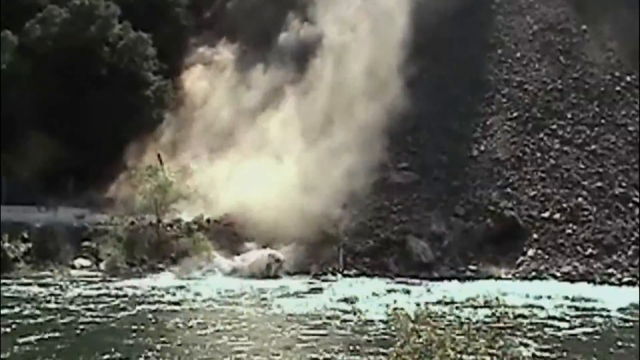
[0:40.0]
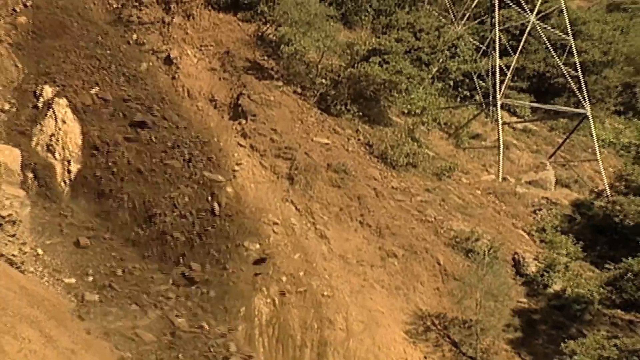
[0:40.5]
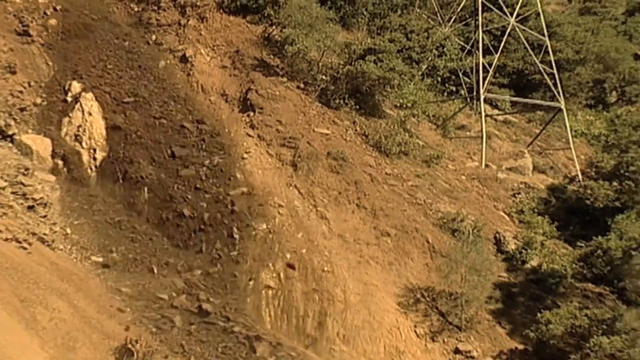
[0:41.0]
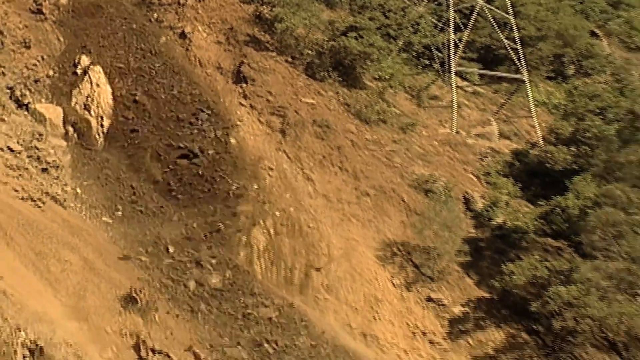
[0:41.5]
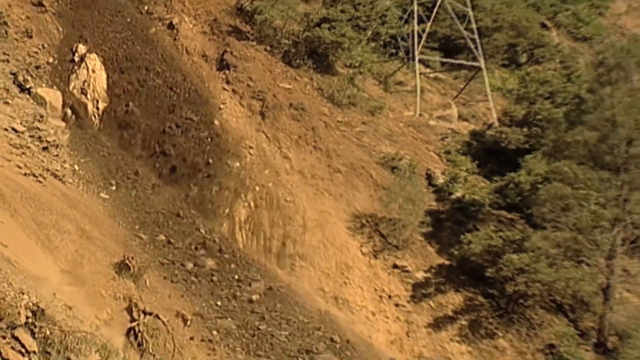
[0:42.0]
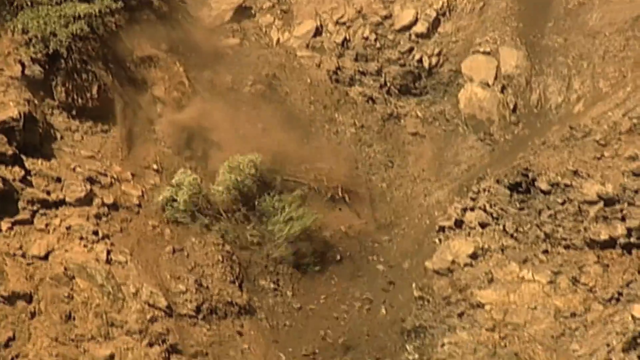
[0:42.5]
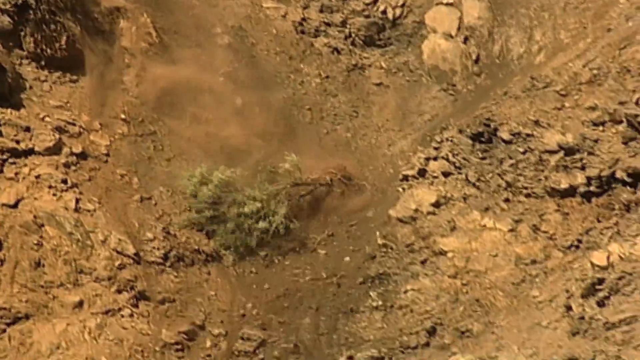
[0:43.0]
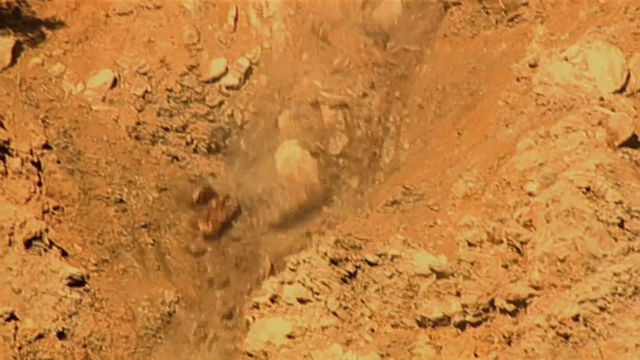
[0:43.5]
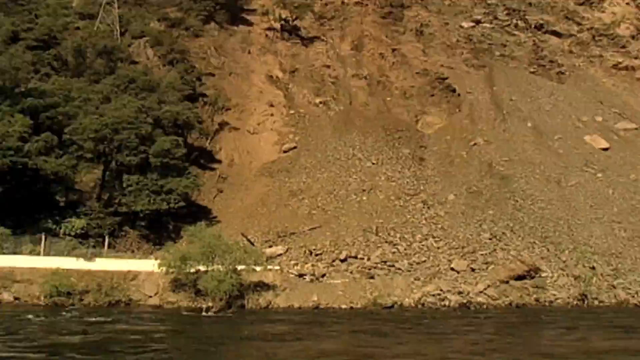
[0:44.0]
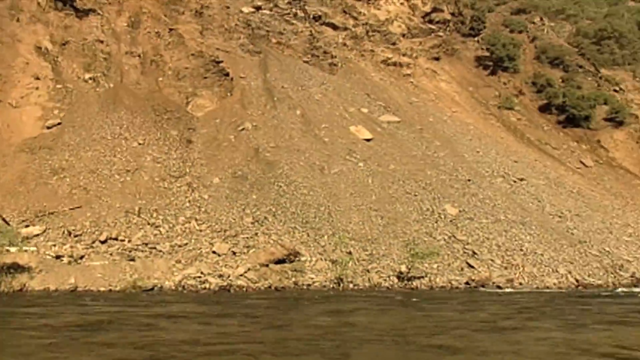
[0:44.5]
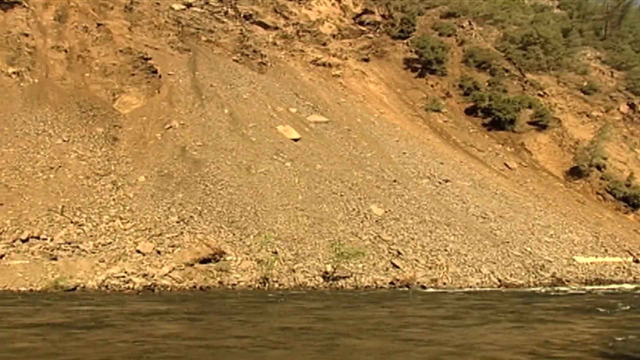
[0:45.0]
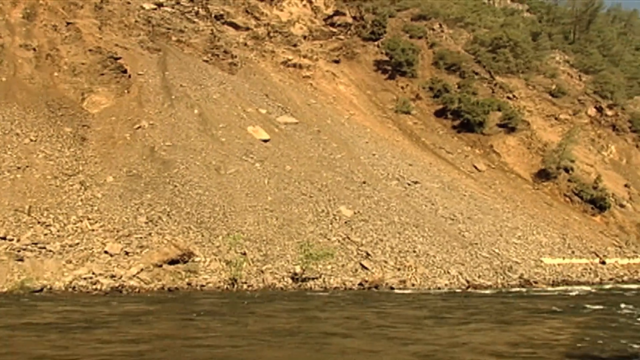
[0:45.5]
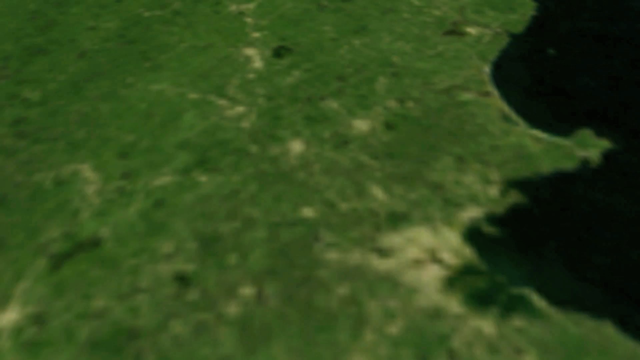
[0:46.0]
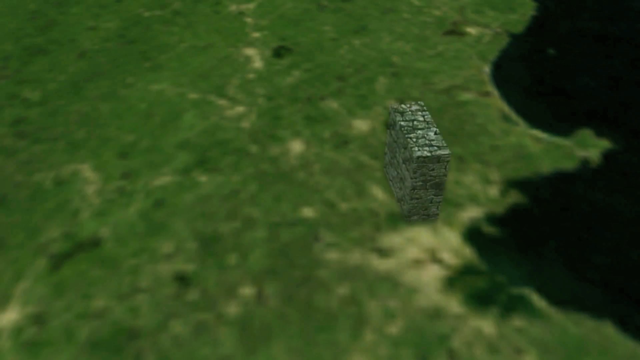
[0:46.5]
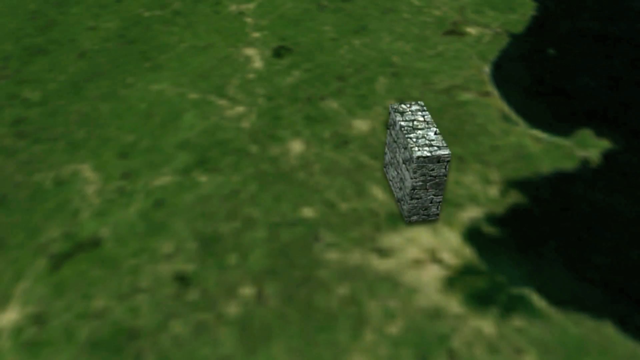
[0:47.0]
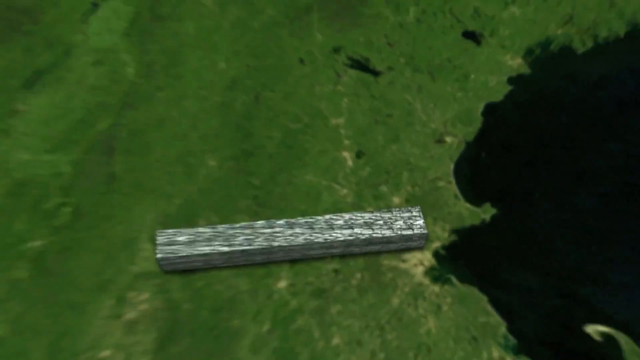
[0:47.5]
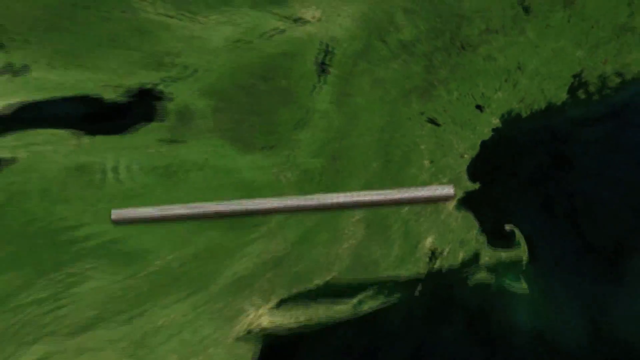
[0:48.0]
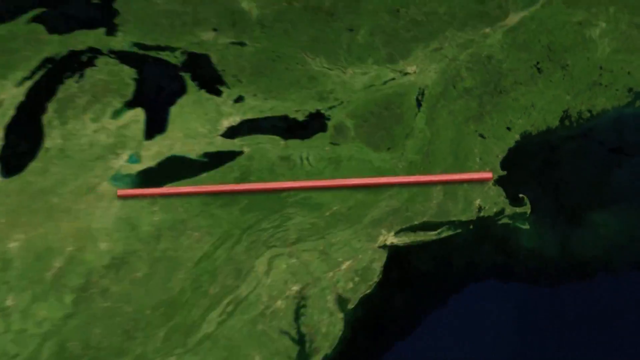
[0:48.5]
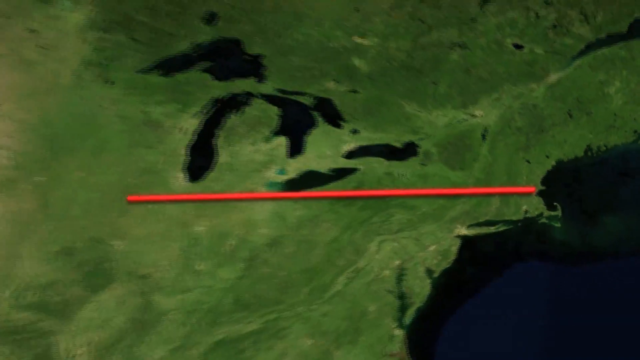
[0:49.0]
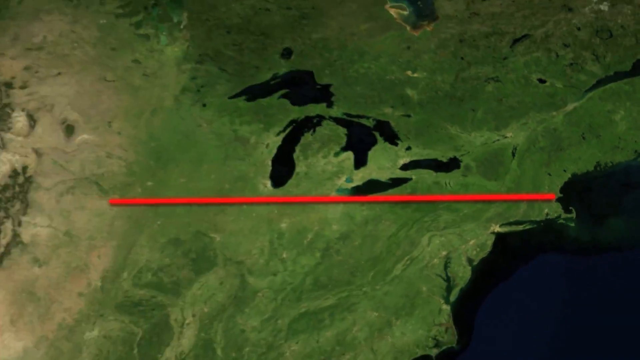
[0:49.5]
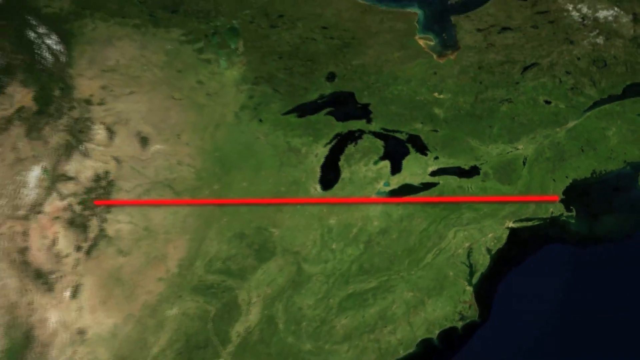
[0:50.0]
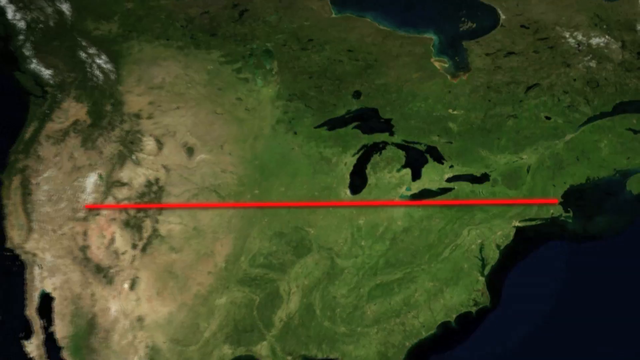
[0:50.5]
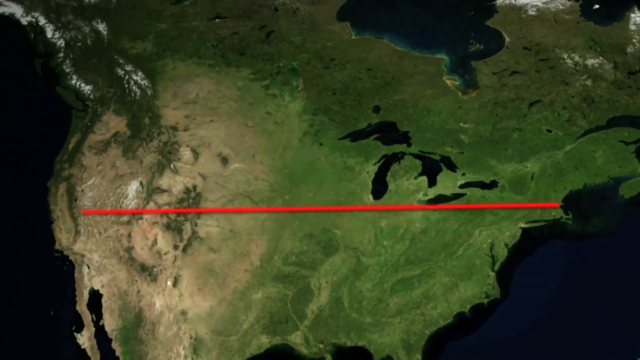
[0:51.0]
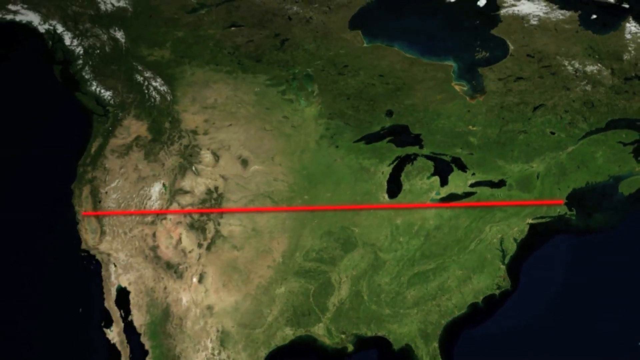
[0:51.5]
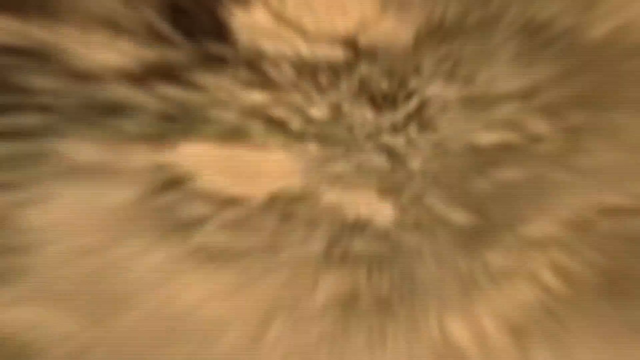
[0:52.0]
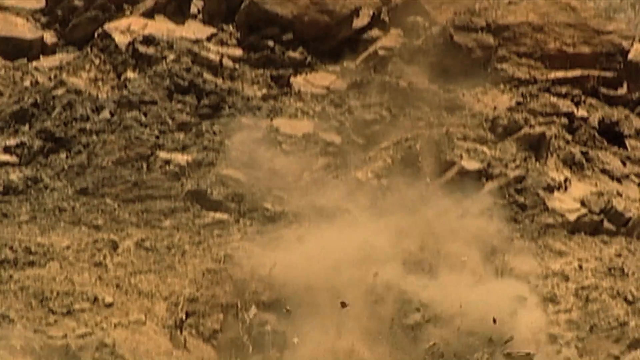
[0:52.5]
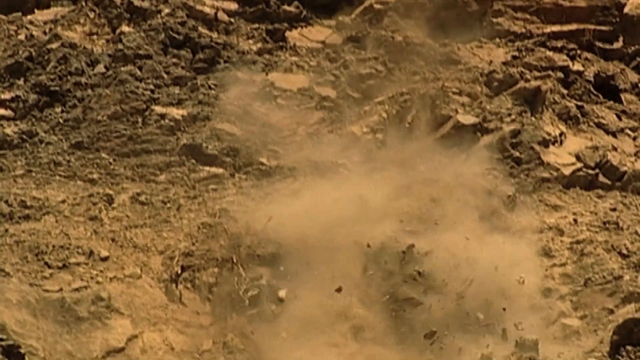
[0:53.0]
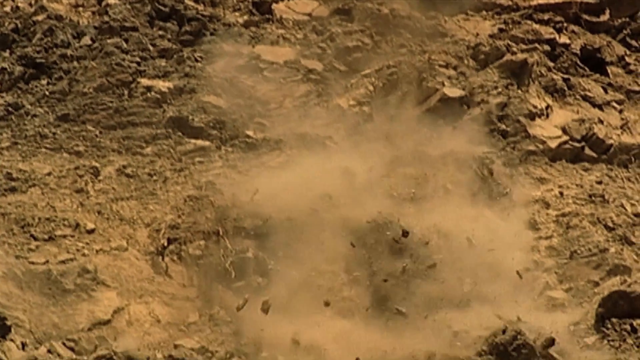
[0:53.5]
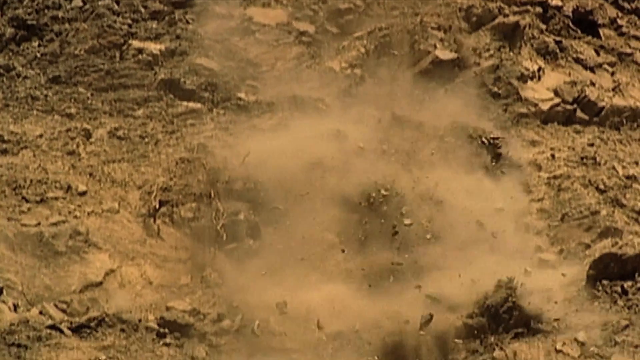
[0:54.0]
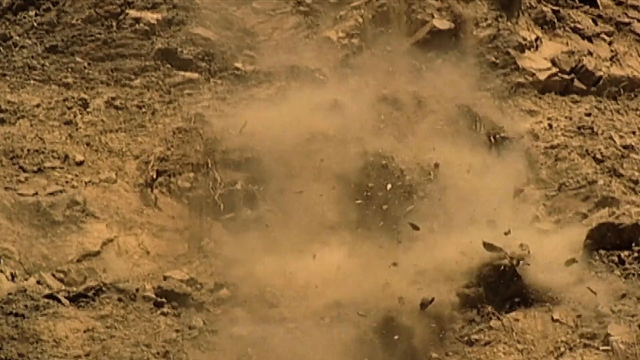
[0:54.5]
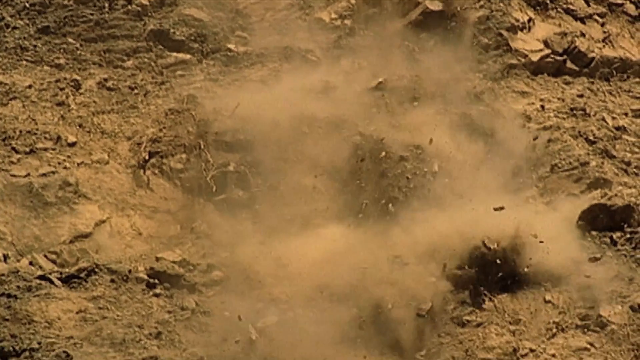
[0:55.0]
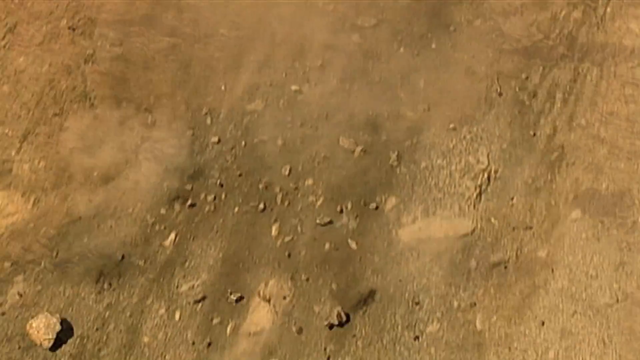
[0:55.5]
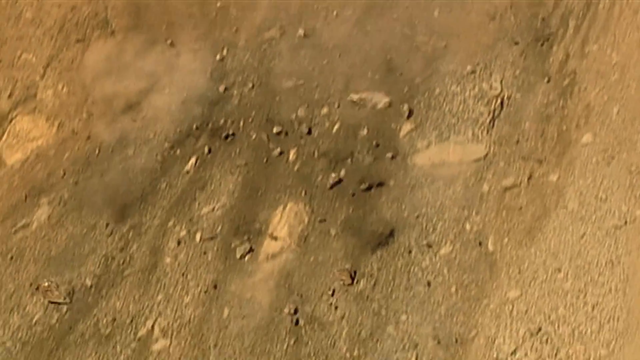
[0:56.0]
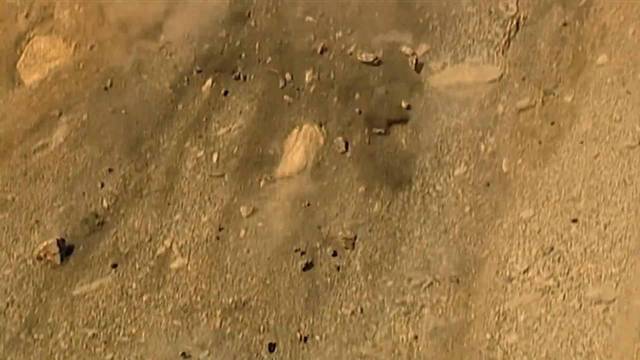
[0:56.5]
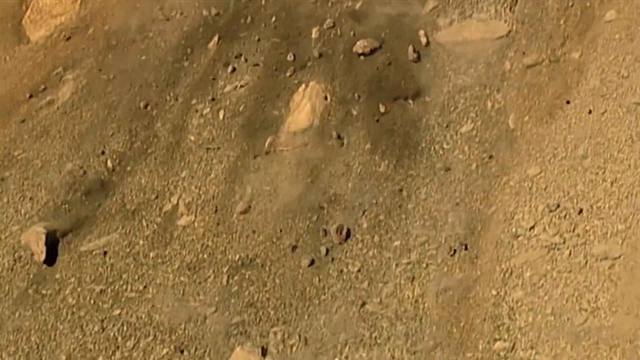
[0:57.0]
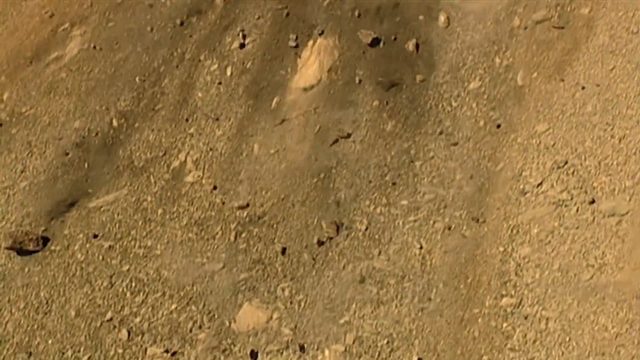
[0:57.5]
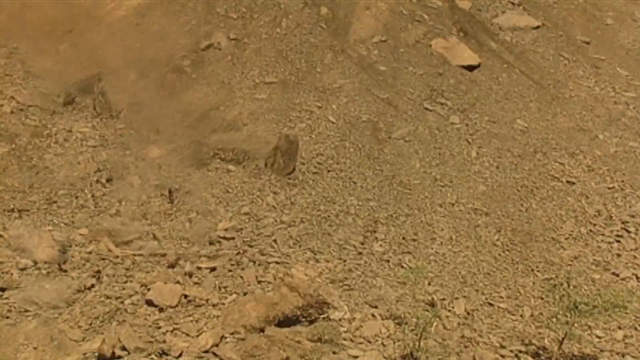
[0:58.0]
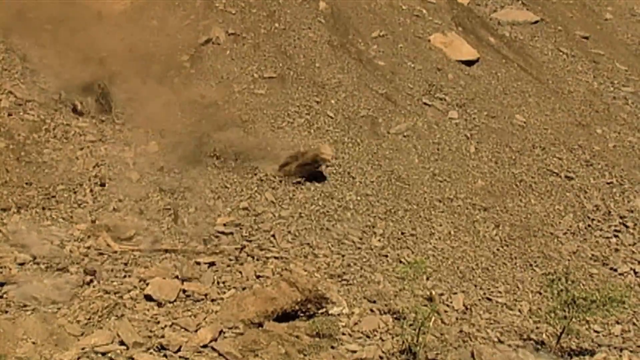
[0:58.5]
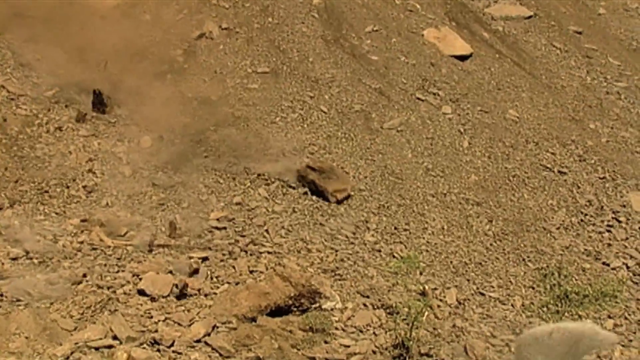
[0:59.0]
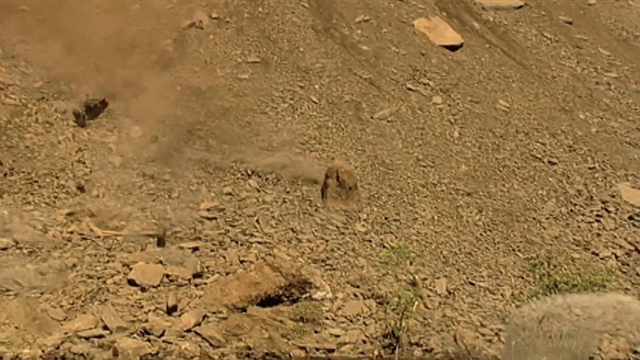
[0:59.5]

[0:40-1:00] Rocks fall, creating almost a smoke as they tumble down from above. Another scene shows a landslide in which terracotta-colored dirt and gray rocks fall from high above at a very dangerous speed. A graph then crosses over what looks like a topographical map, showing a red line across the United States, perhaps indicating where these slides might occur; no text describes what the graph shows. The line runs across the map of the northeast as a direct, straight horizontal line from the east coast to the west coast. Rocks land in what looks like a river below, which seems to have white-capped waters. Trees fly down the sides of a mountain, and as the rocks fall a great amount of smoke rises.